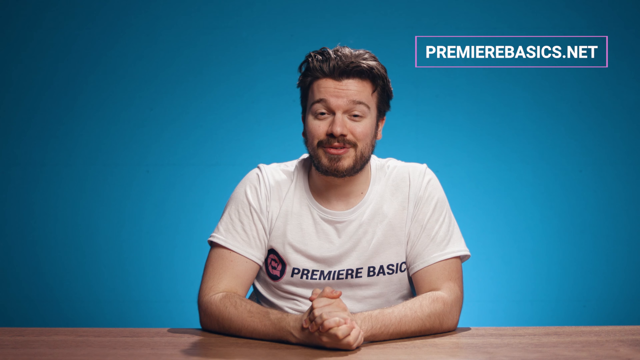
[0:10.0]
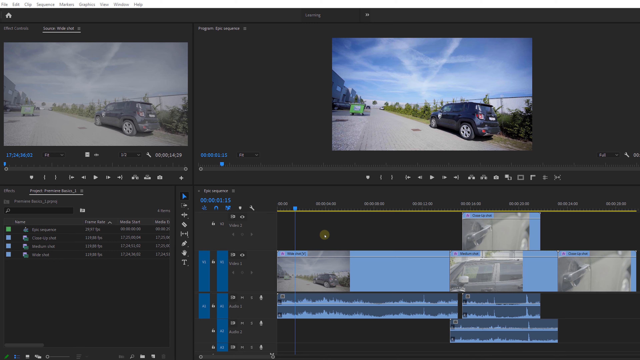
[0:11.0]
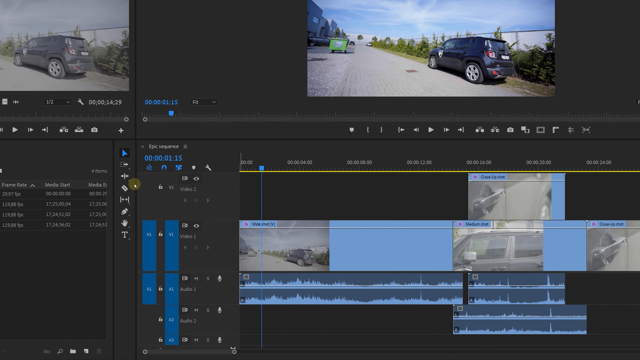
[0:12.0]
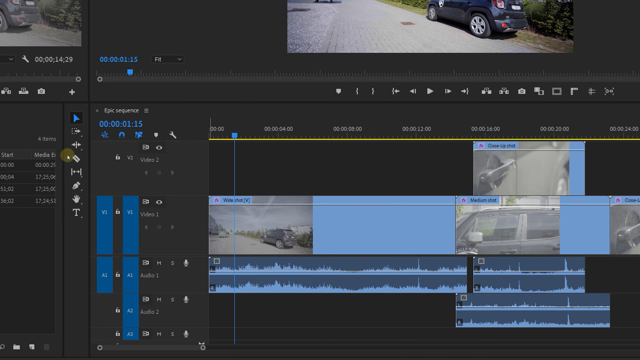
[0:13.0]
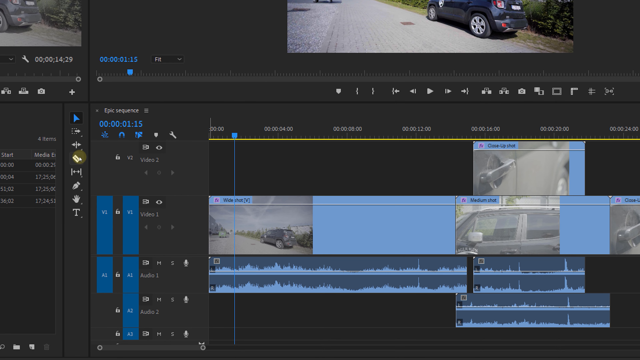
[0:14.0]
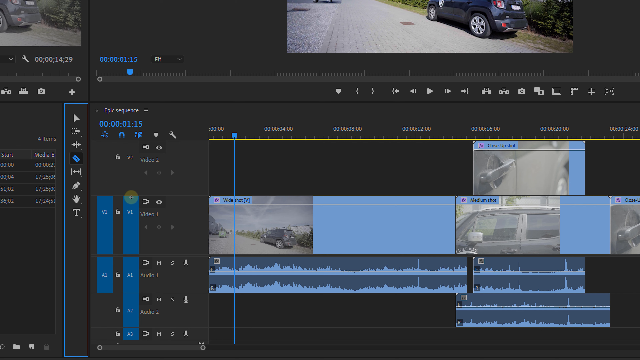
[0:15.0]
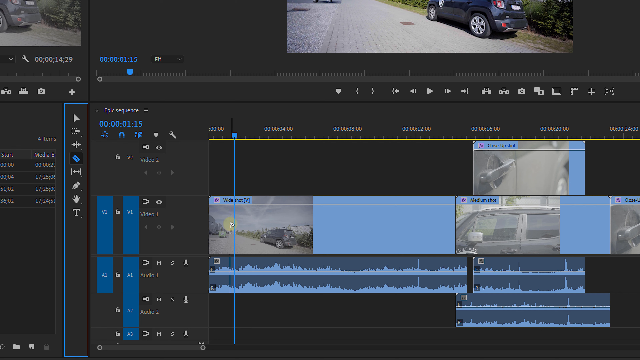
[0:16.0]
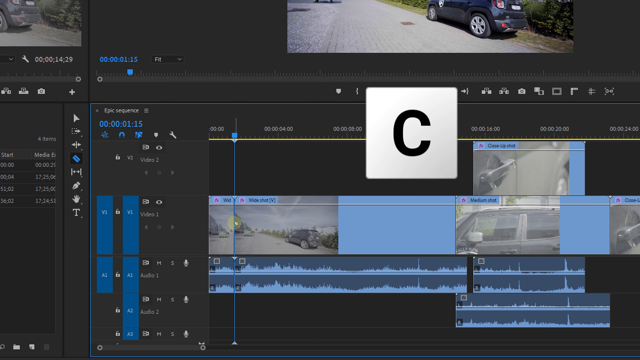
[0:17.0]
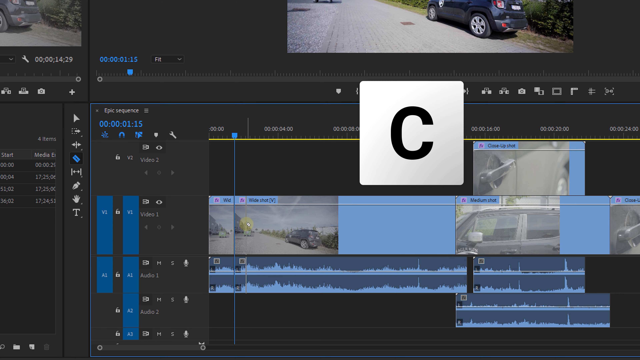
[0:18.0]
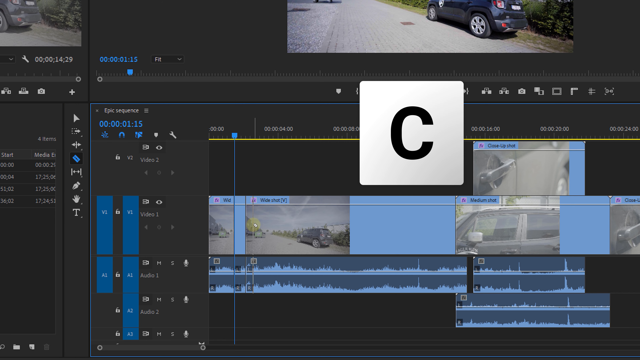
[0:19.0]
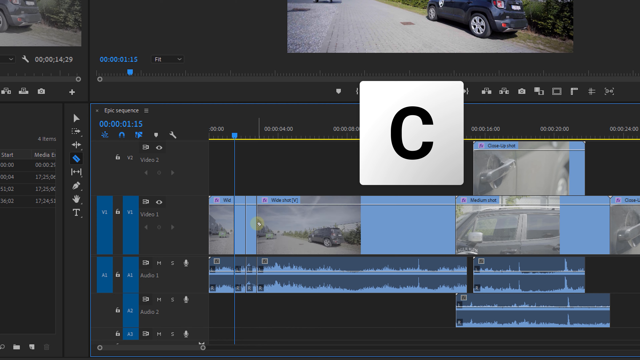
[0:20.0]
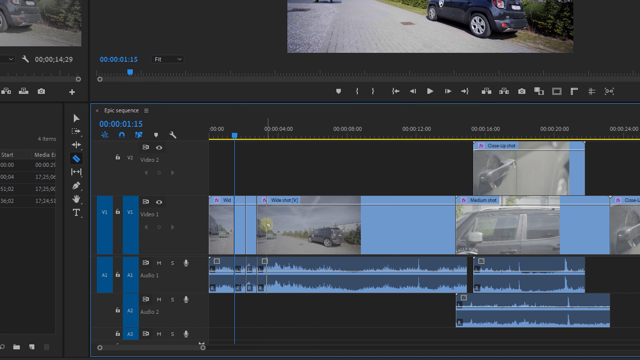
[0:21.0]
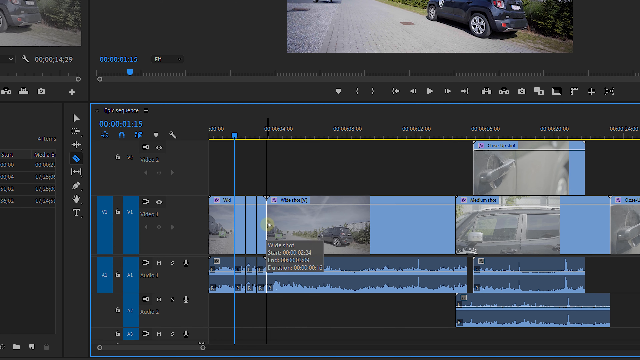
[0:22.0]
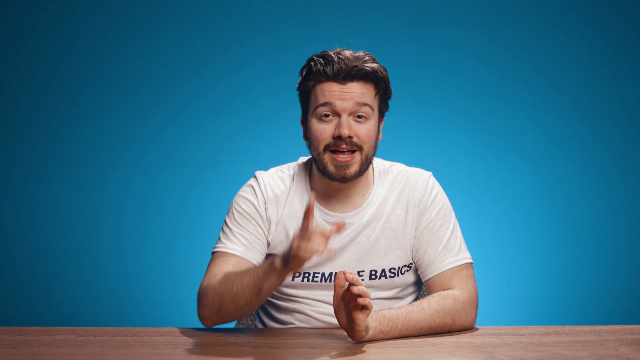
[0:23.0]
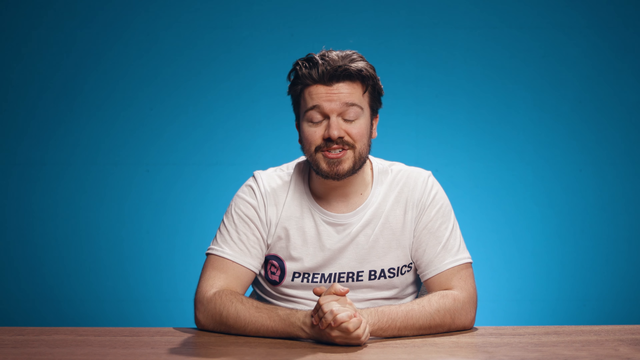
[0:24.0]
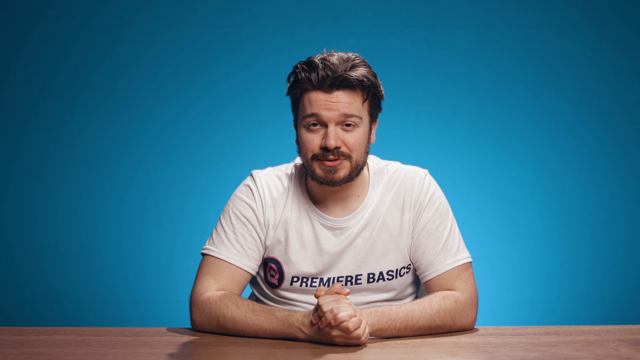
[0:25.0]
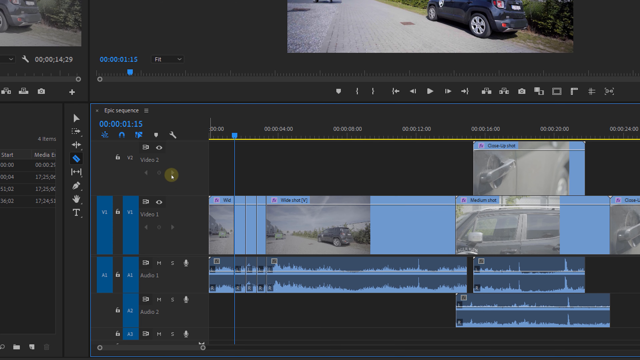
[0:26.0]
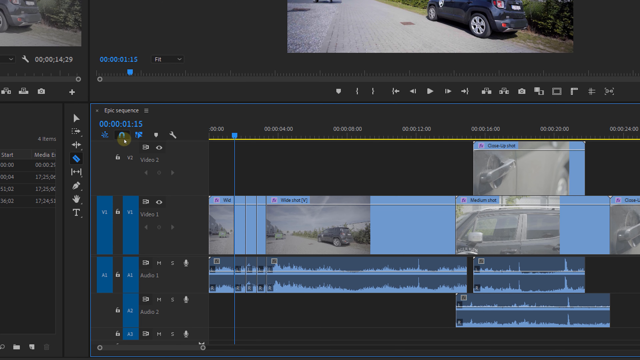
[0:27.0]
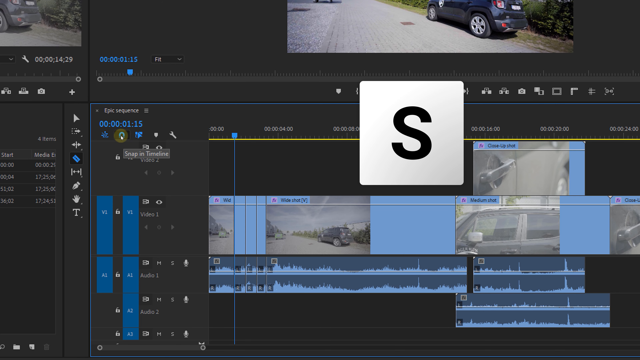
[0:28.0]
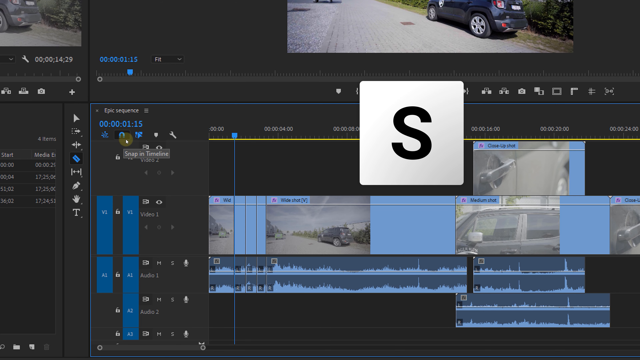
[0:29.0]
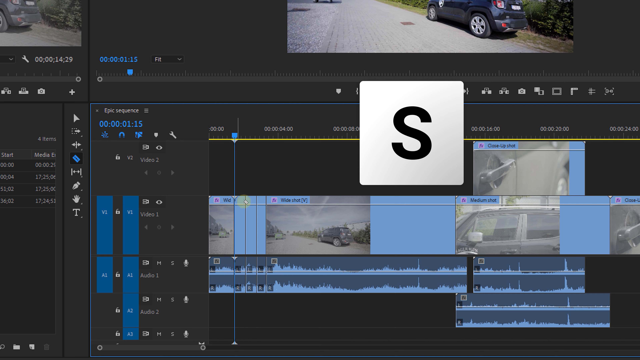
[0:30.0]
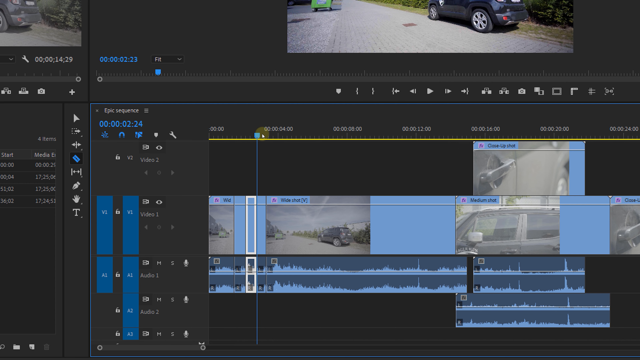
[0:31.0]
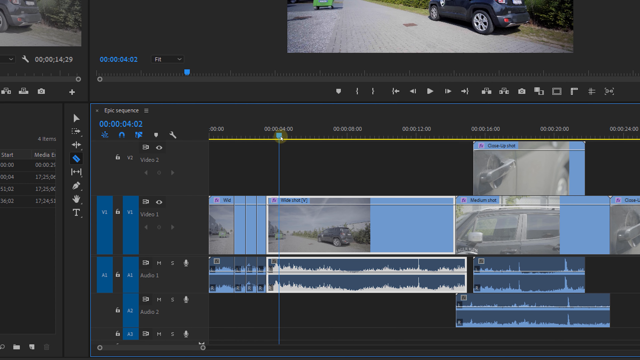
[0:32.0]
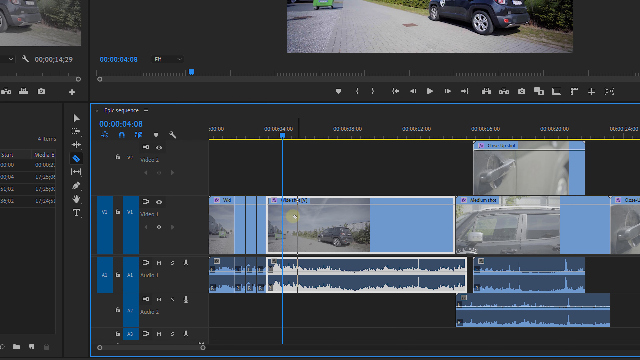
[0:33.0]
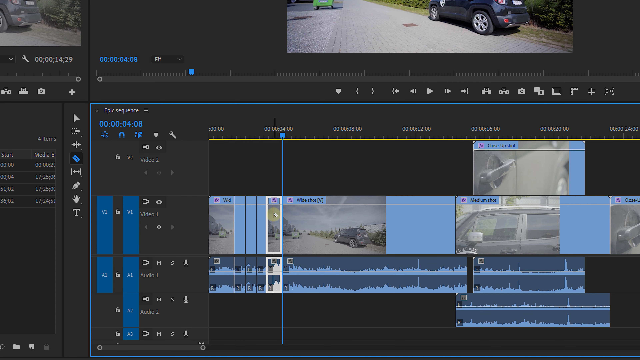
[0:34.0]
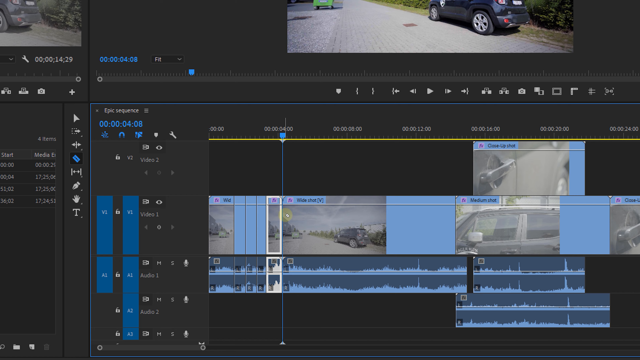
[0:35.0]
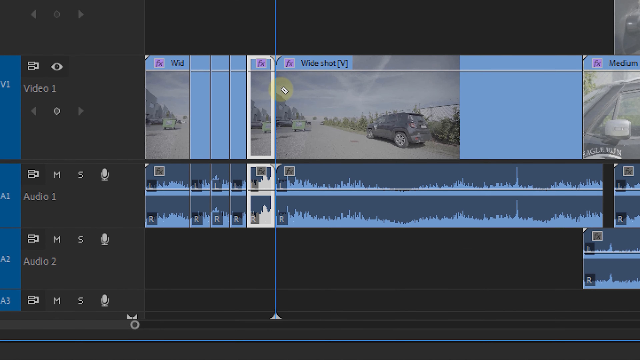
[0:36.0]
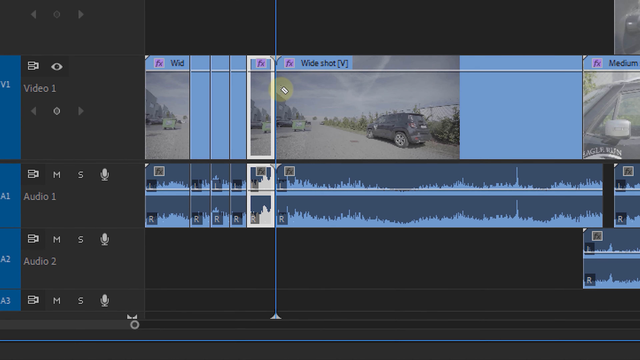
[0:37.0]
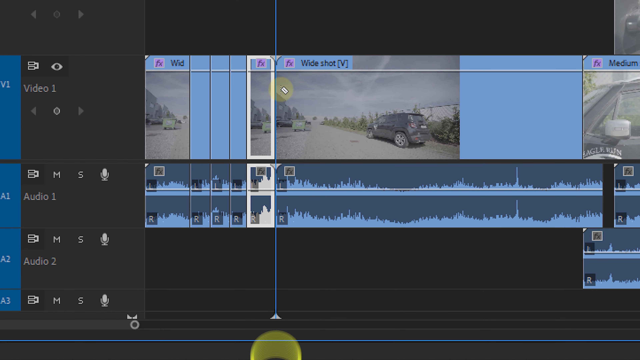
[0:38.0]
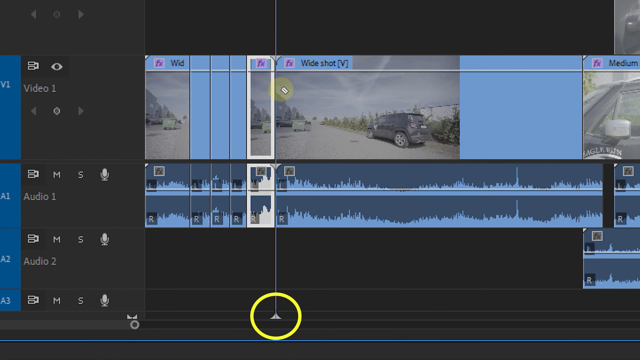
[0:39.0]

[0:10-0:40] Someone who appears to be a reporter presents something, and a PC screen is shared. The screen is divided into two parts: the upper part shows a black car, and the lower part is cropped so the car can be seen from its other side. On the right side of the screen there seems to be a graph measuring something. Something is pressed and the letter C appears, as though a video is being edited; another option is pressed and the letter S appears. The mouse arrow keeps moving as if editing the picture, then goes to select another option where letters start to come out. The video then cuts back to the man.